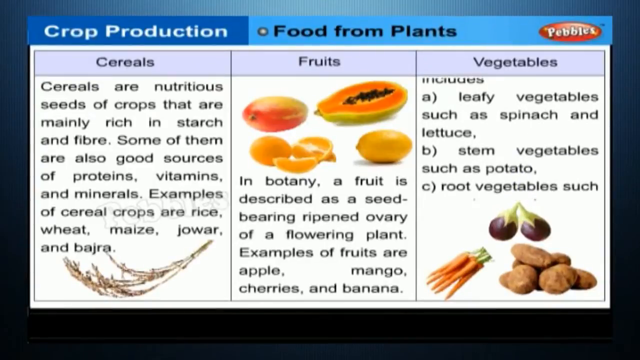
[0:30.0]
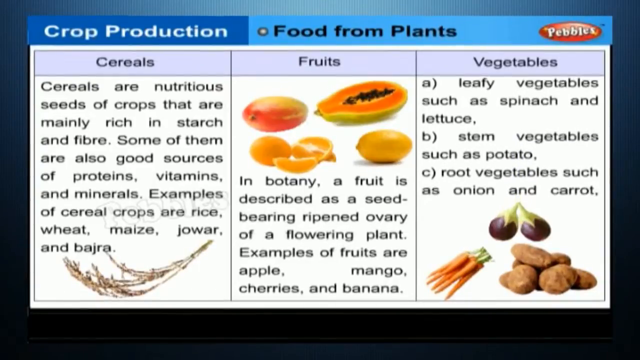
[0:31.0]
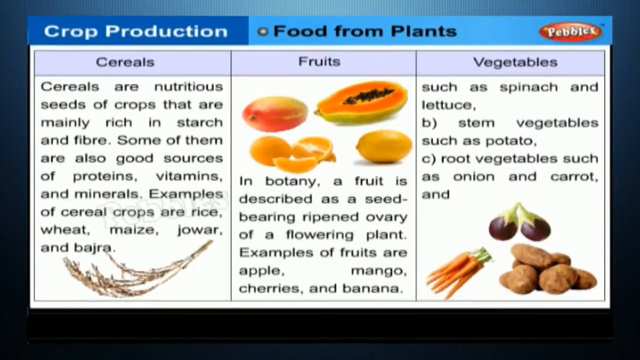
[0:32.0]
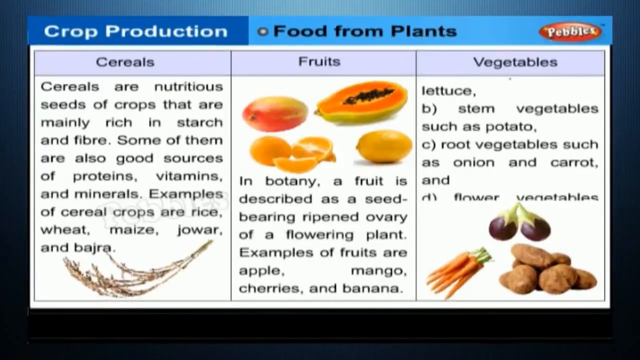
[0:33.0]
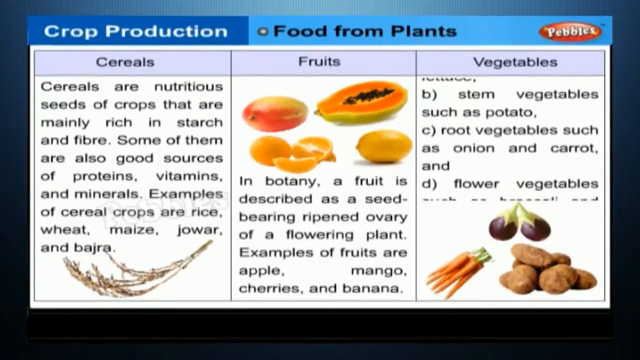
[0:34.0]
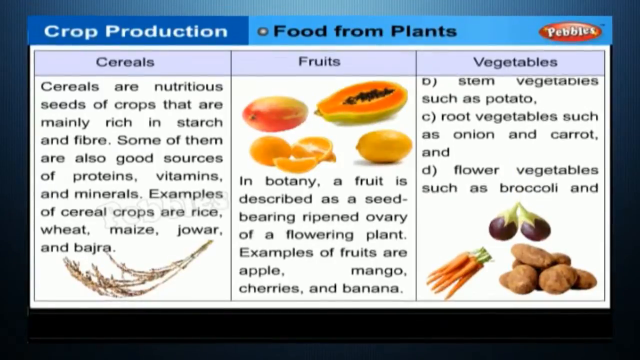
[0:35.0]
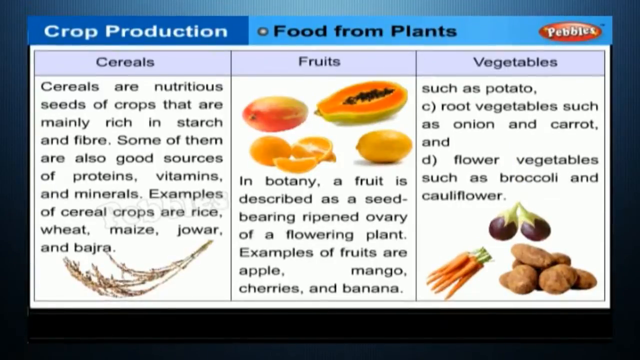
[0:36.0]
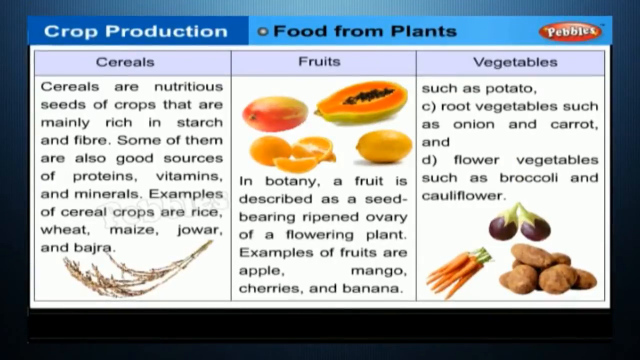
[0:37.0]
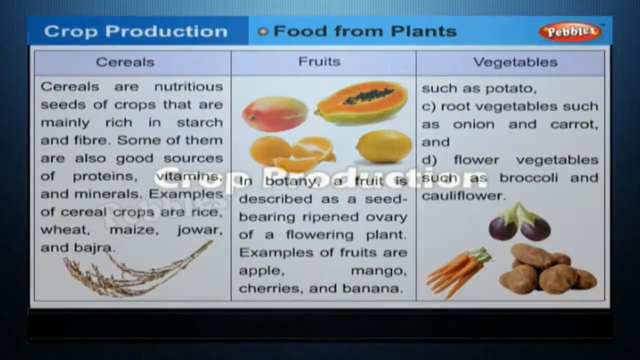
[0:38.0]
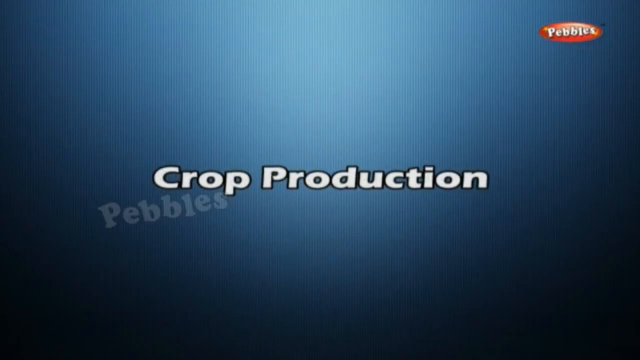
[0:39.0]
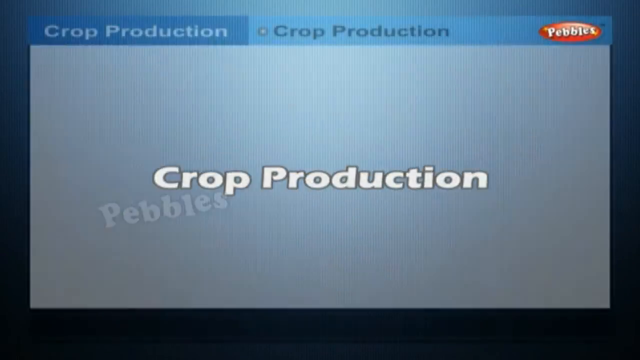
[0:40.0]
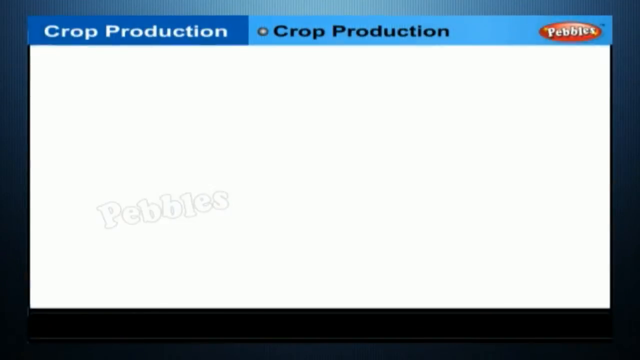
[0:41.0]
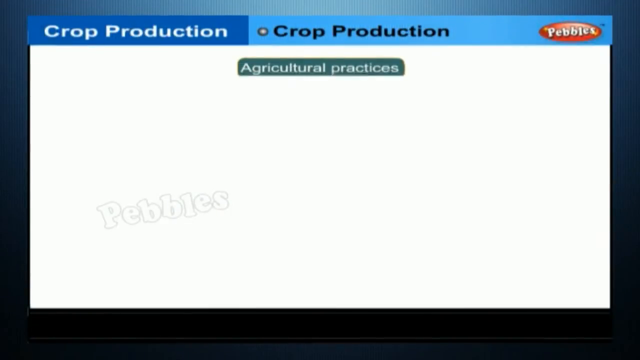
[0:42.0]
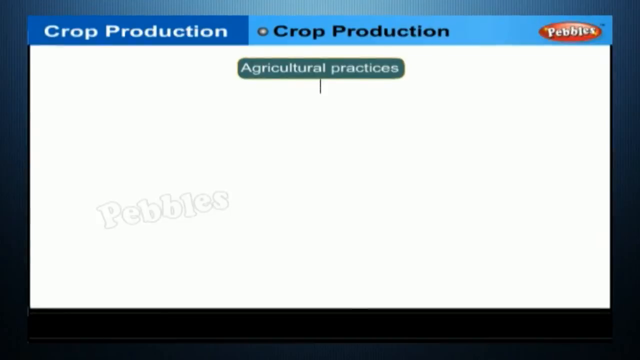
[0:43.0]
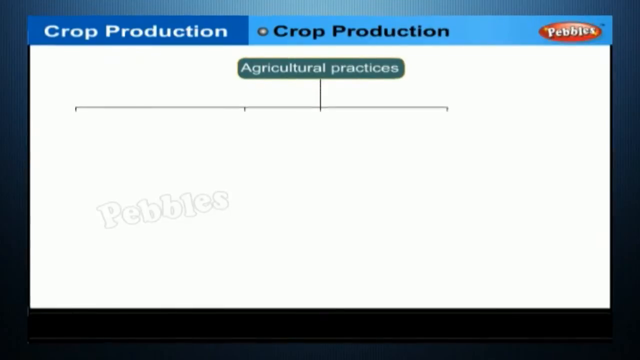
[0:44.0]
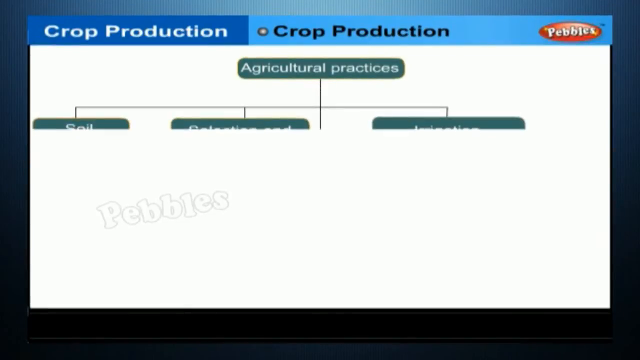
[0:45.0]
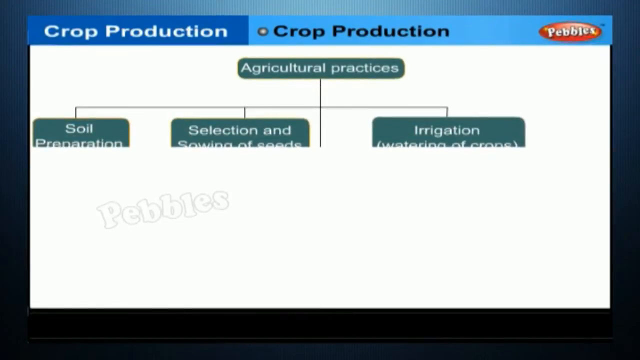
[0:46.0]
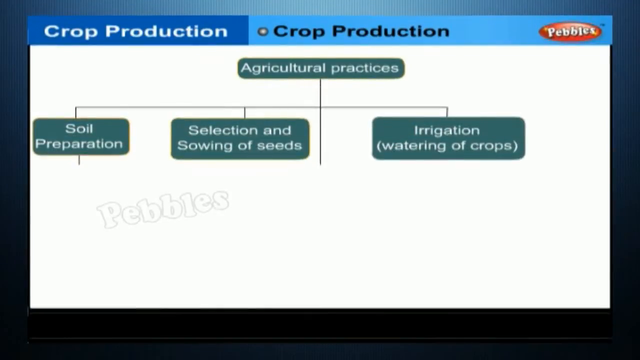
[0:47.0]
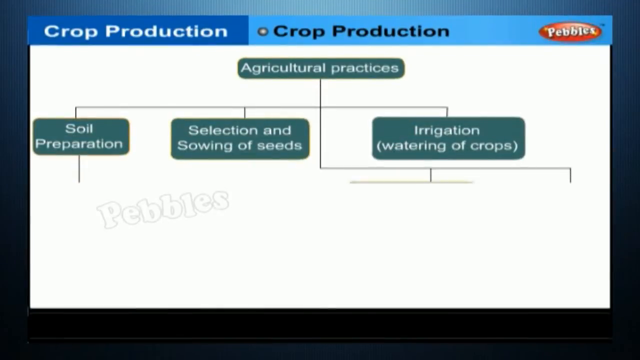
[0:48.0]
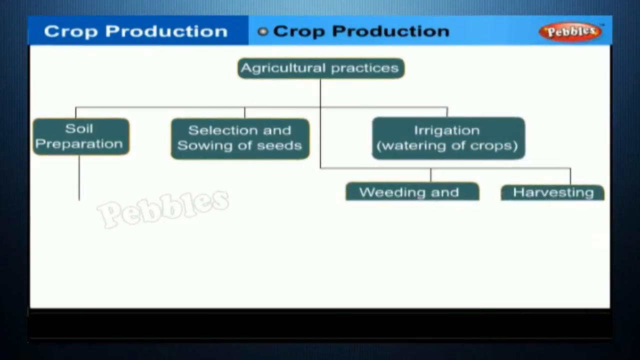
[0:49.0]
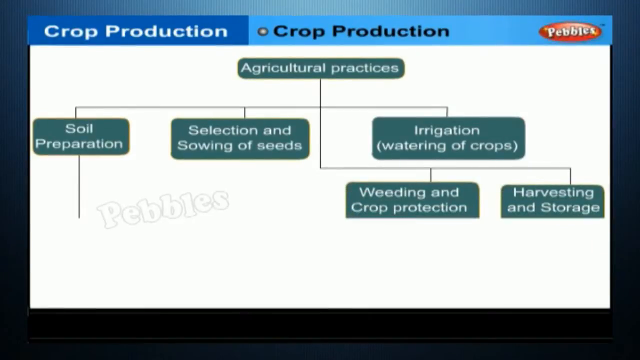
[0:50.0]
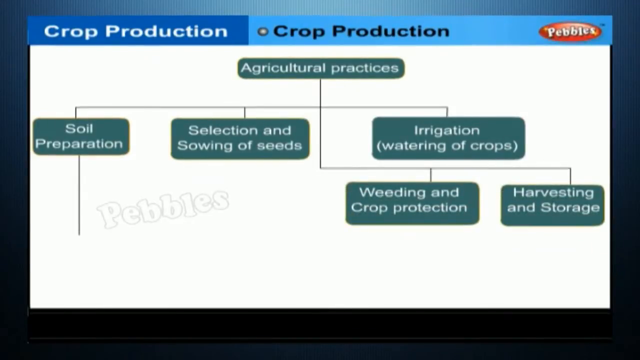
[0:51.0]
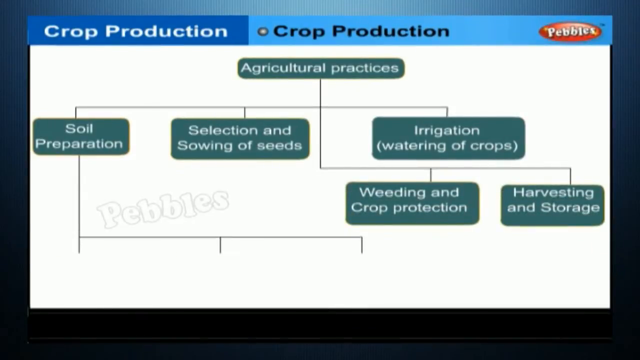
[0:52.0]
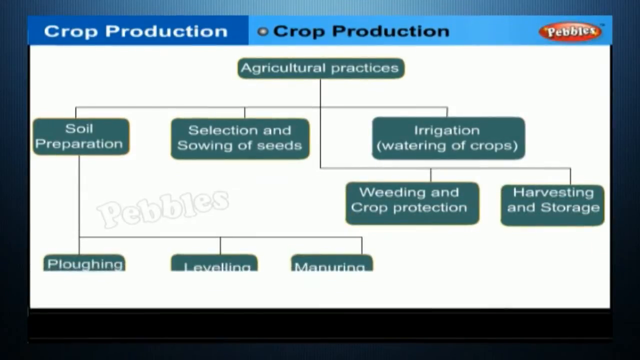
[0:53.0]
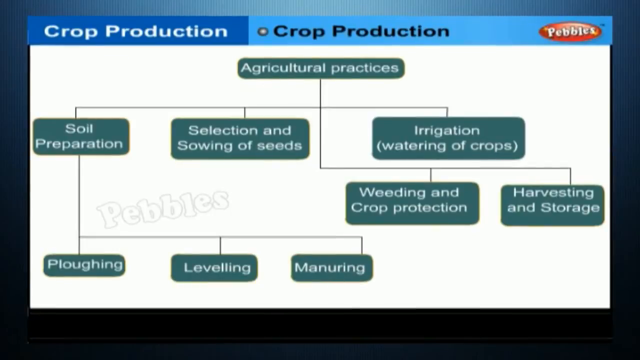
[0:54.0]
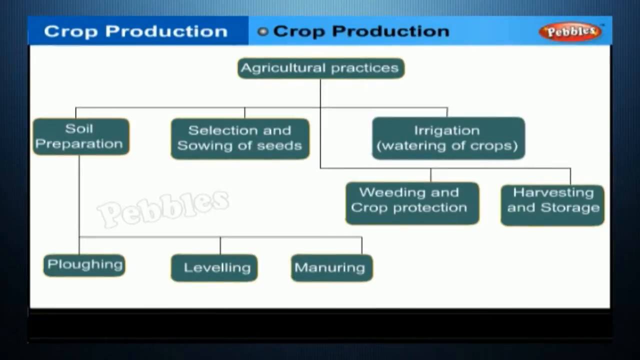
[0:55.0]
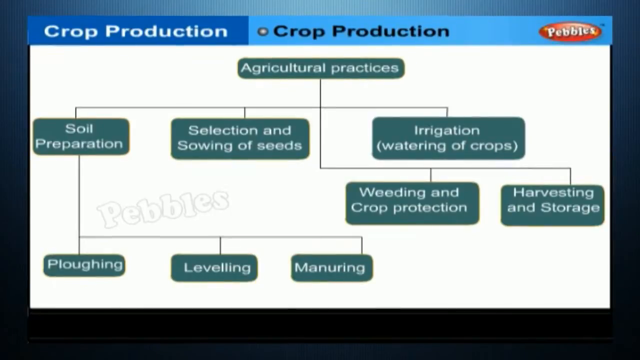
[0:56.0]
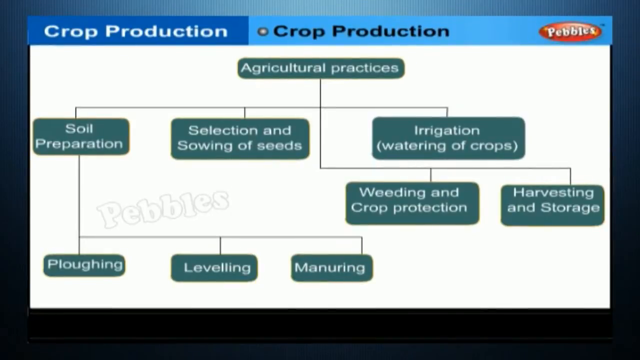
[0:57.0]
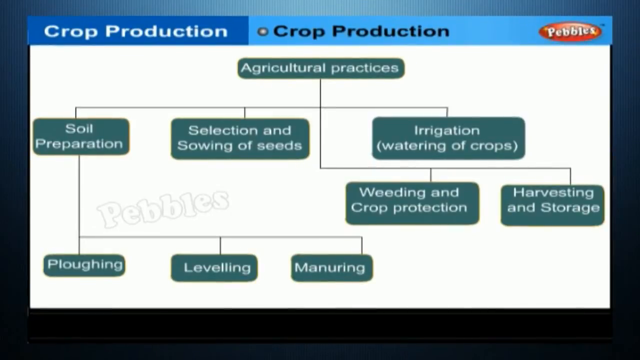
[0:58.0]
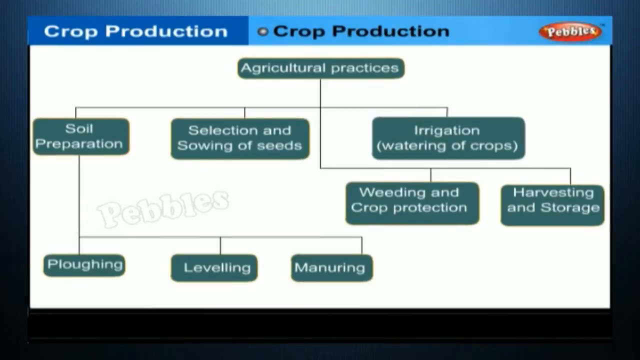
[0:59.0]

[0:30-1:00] The food from plants information page continues, showing cereals: "Cereals are nutritious seeds of crops that are mainly rich in starch and fibre. Some of them are also good sources of proteins, vitamins and minerals. Examples of cereal crops are rice, wheat, maize, jowar and bajra." The second column, fruits, shows an image of mangoes, papayas, oranges and lemons, with the text "In botany, a fruit is described as a seed-bearing ripened ovary of a flowering plant. Examples of fruits are apple, mango, cherries and banana." The vegetable section includes "a. leafy vegetables such as spinach and lettuce, b. stem vegetables such as potato, c. root vegetables such as onion and carrot and d. flower vegetables such as broccoli and cauliflower," with an image of two aubergines, a bunch of carrots and a pile of potatoes. The video then changes to crop production, with a heading of agricultural practices and a flowchart with arrows to three headings: soil preparation, selection of sowing seeds, and irrigation watering of crops, and also weeding and crop protection, and harvesting and storage. A further flowchart from soil preparation shows ploughing, levelling and manuring.